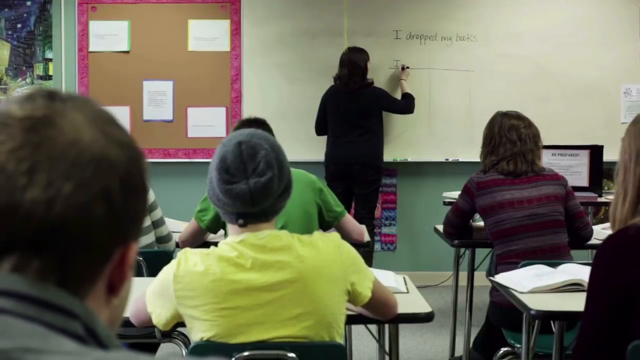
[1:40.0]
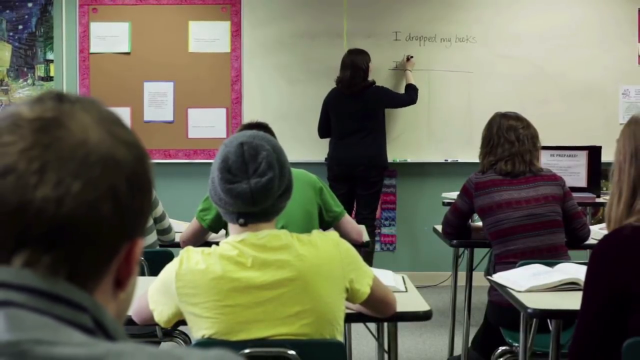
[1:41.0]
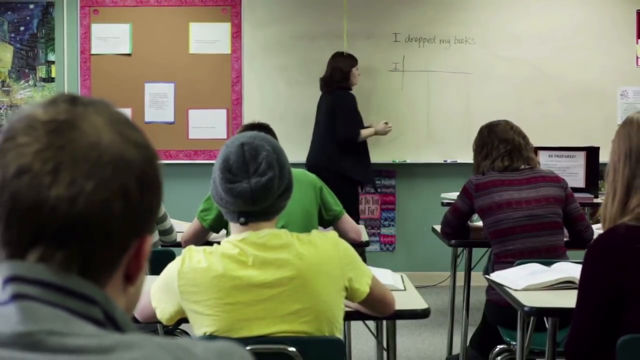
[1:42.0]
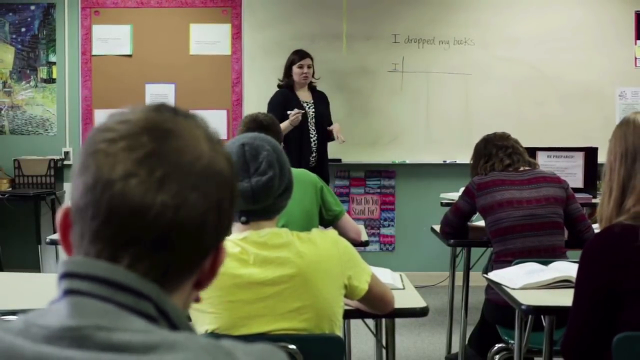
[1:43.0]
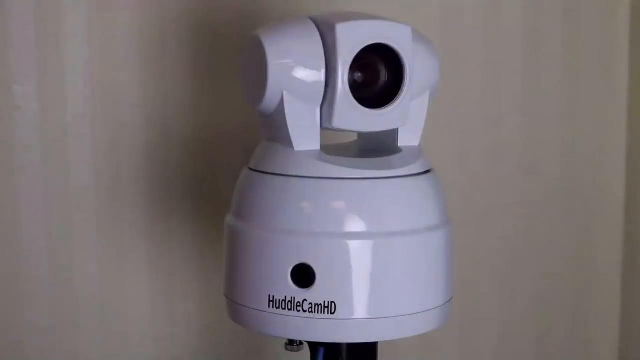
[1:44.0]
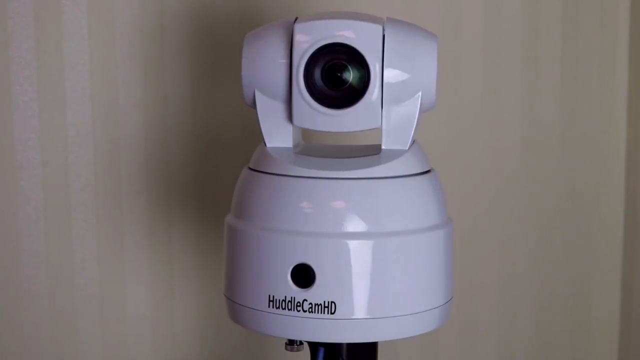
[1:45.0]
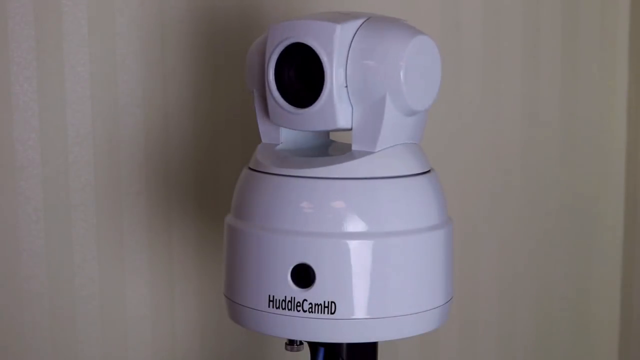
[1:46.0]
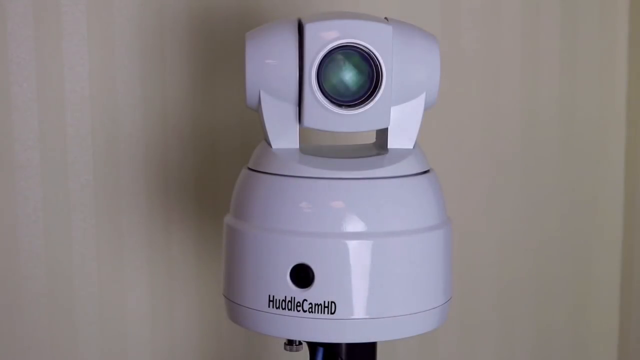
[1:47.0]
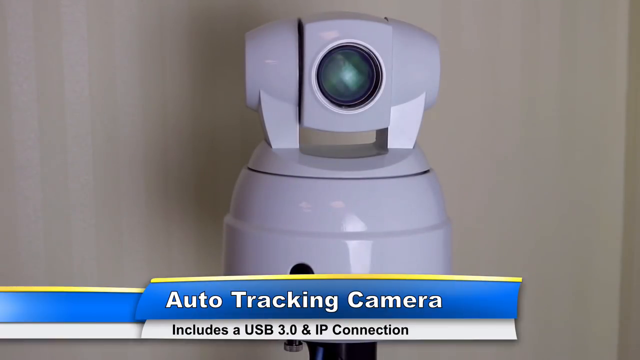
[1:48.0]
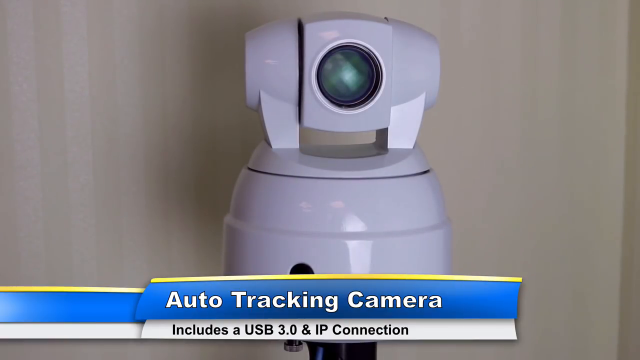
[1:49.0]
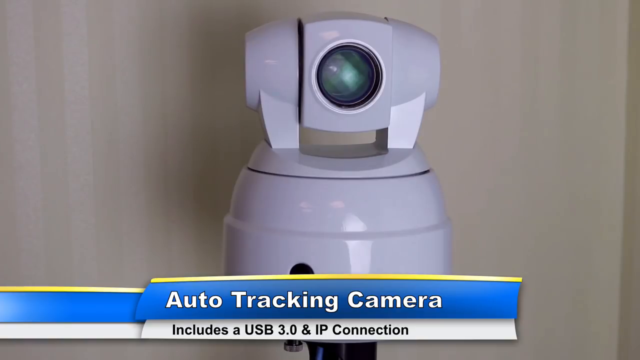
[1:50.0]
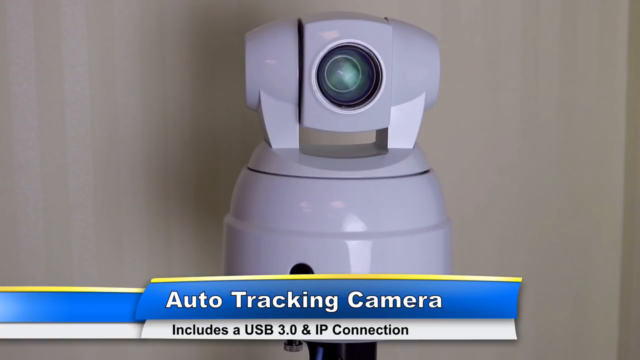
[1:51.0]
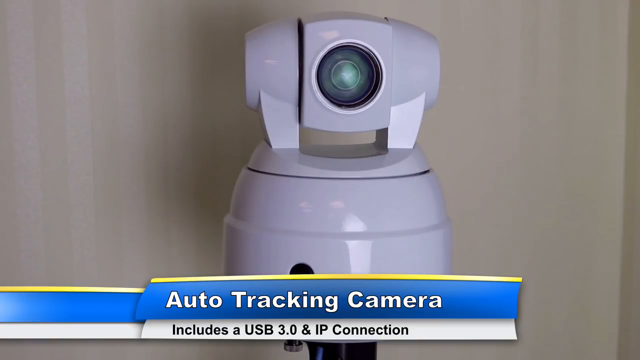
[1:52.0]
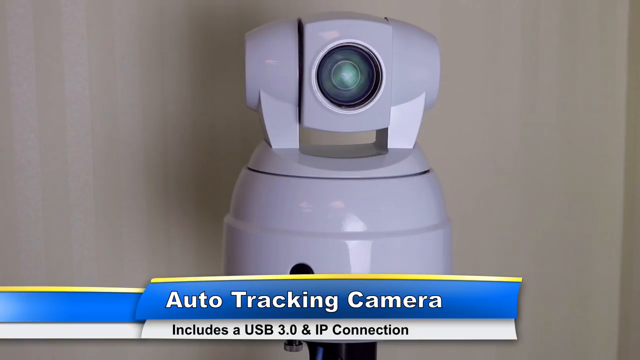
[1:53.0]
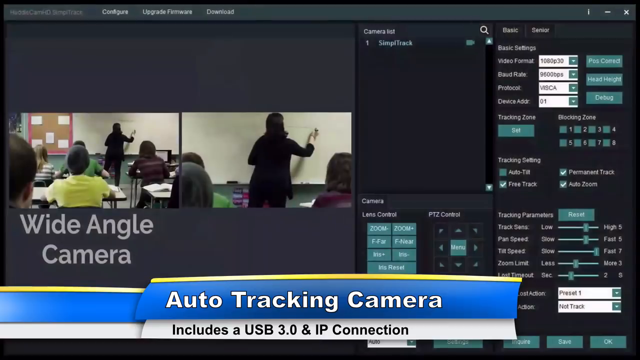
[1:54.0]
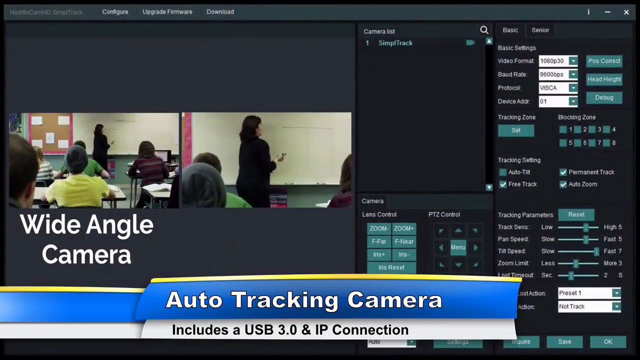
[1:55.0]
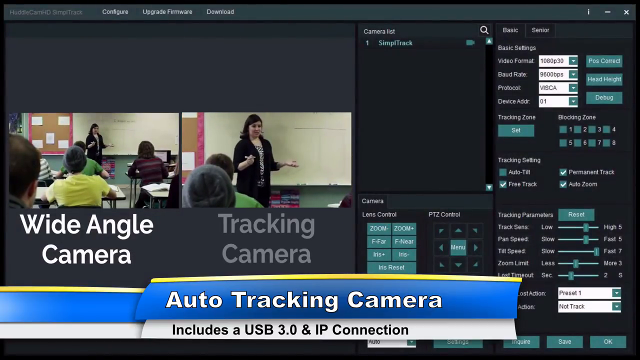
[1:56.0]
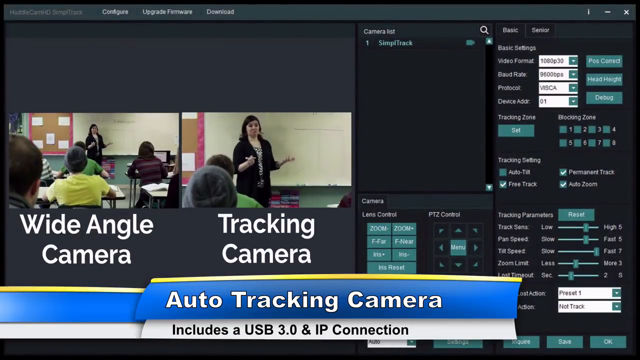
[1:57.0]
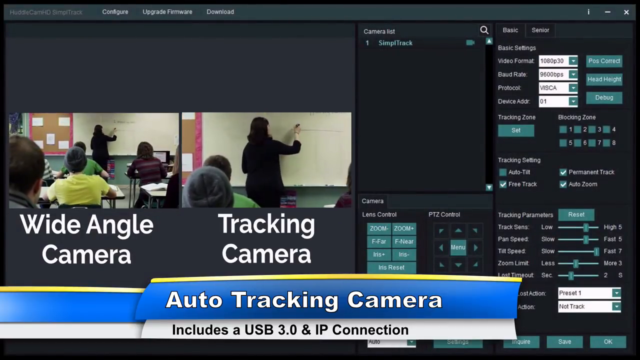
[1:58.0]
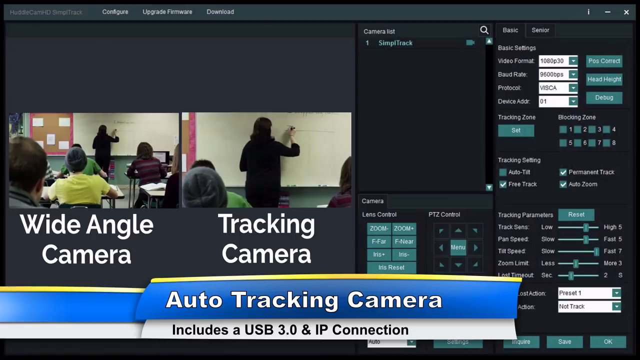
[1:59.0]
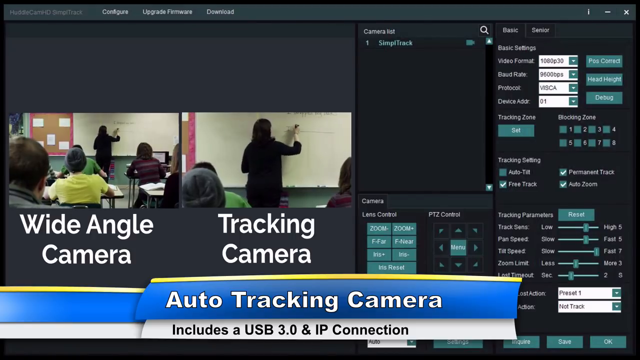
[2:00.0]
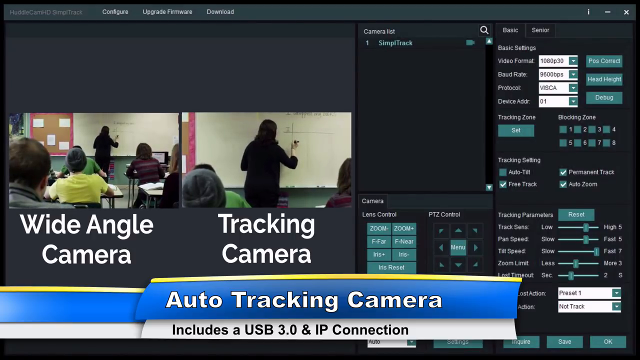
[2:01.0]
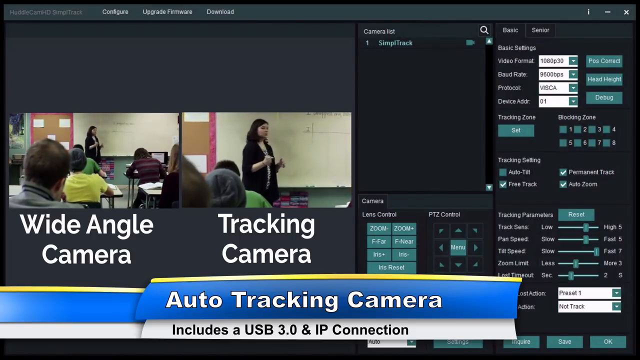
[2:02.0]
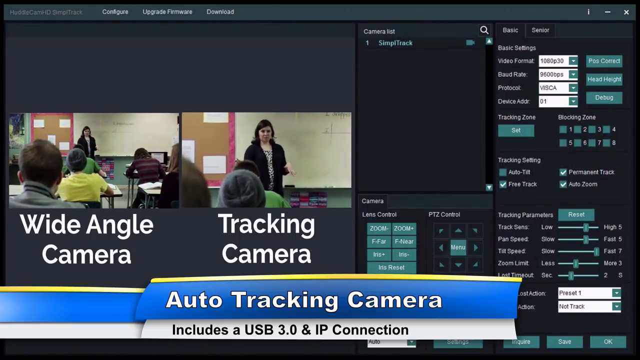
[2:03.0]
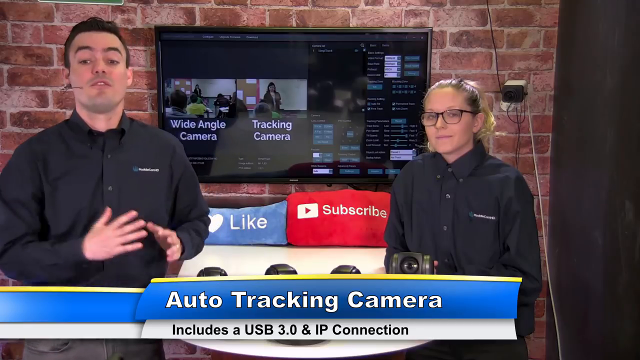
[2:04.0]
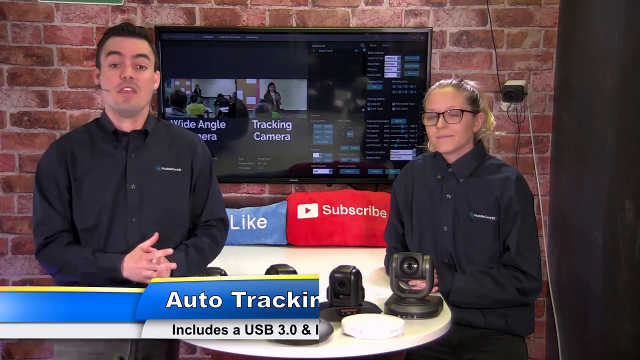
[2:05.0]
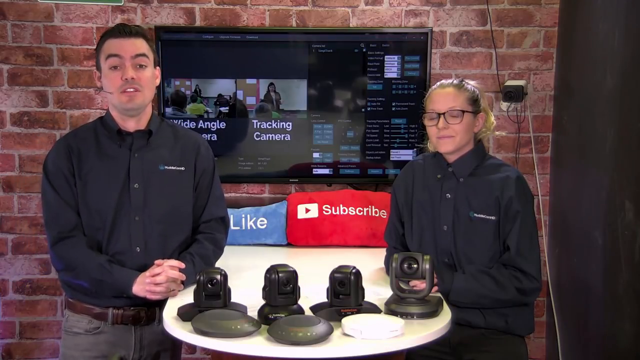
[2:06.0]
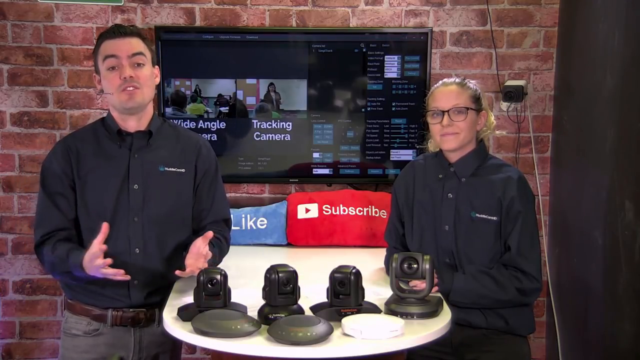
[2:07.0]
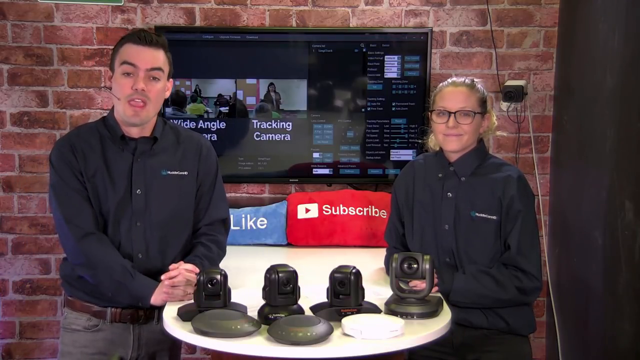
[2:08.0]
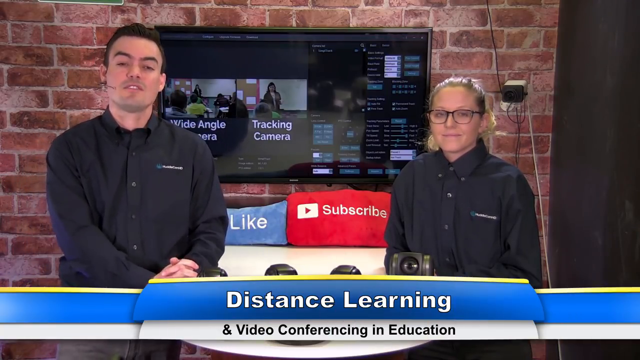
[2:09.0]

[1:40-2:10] The teacher is shown teaching from a first-person perspective, as if from one of the kids sitting at a desk; some students are seen from behind and the teacher from the front. The scene changes to a very zoomed-in white camera whose top rotates, called "Huddle Cam HD." Below, text reads "Auto Tracking Camera," along with "USB 3.0 and IP connection." The camera's lens is at the top center. Next, a split screen shows the teacher teaching: the left side, labeled "Wide Angle Camera," is more zoomed out, and the right side, labeled "Tracking Camera," is more zoomed in. On the right side of the screen is a black area with many camera adjustment settings. The two people from the beginning of the video then appear in the same setting, with the man on the left speaking to the camera.